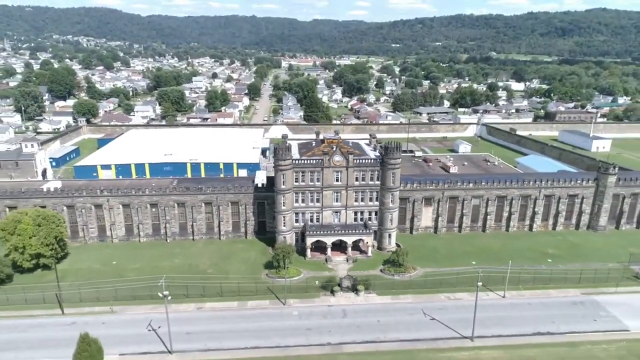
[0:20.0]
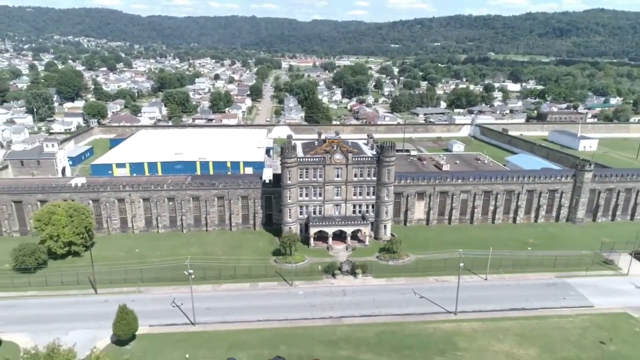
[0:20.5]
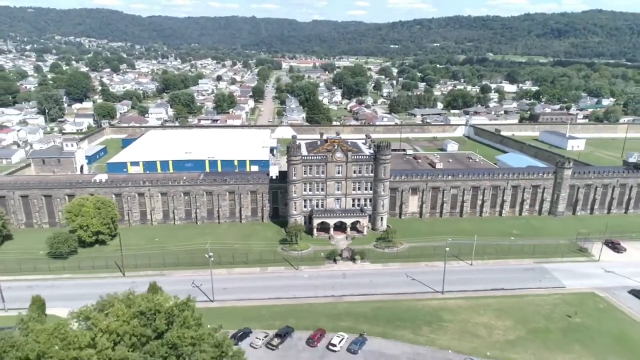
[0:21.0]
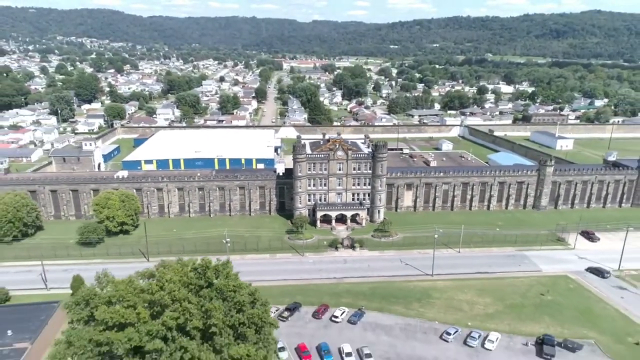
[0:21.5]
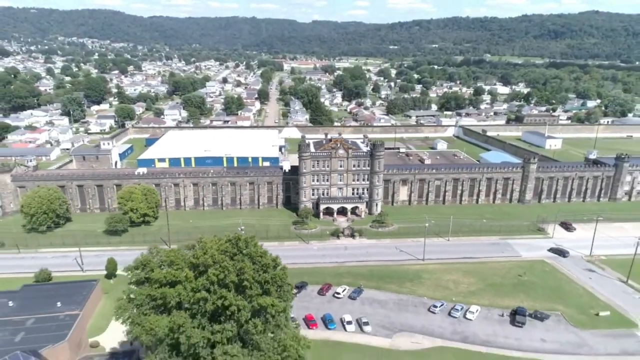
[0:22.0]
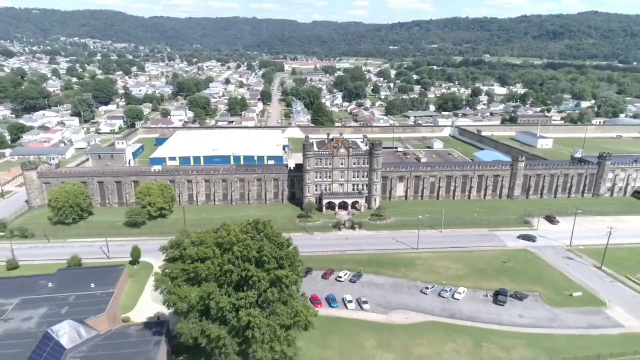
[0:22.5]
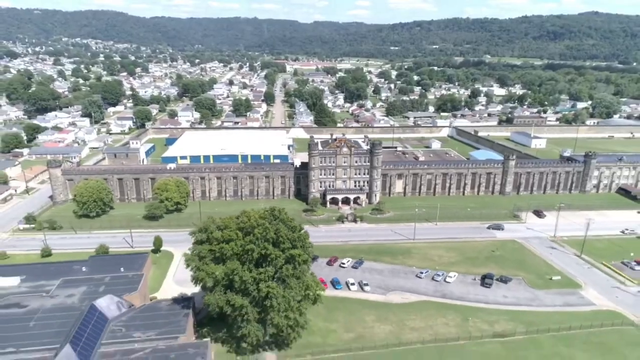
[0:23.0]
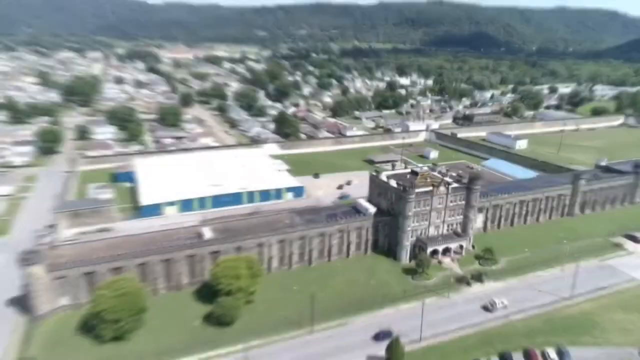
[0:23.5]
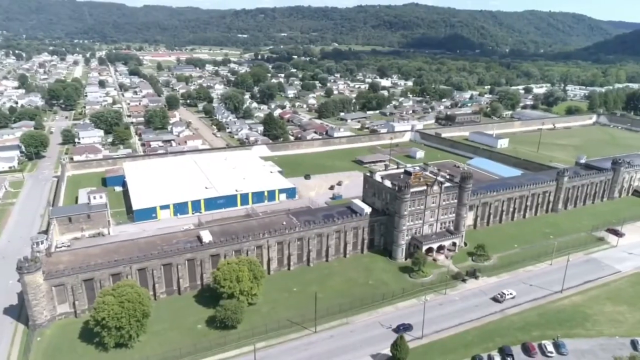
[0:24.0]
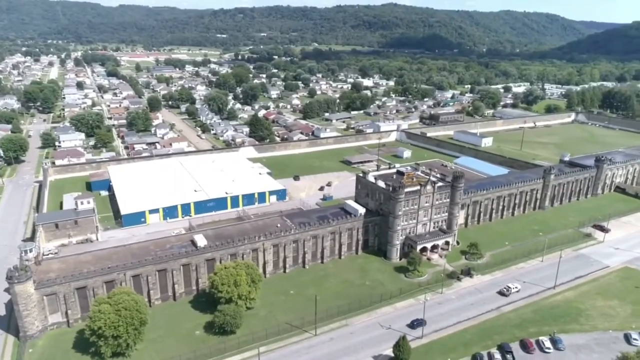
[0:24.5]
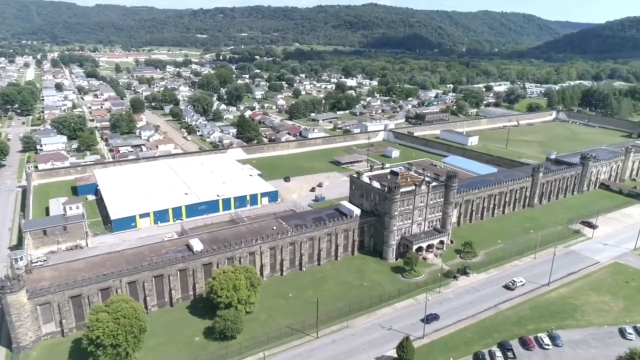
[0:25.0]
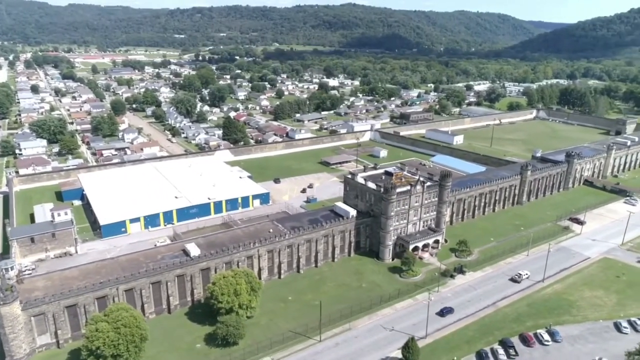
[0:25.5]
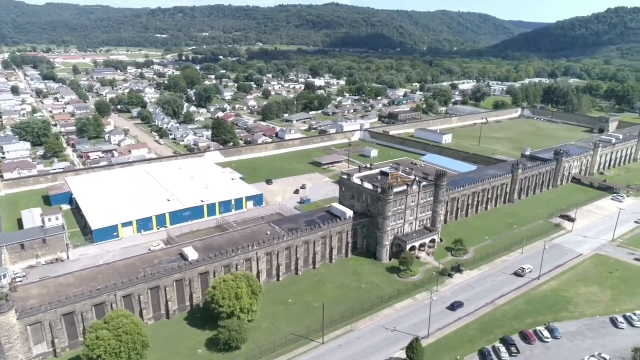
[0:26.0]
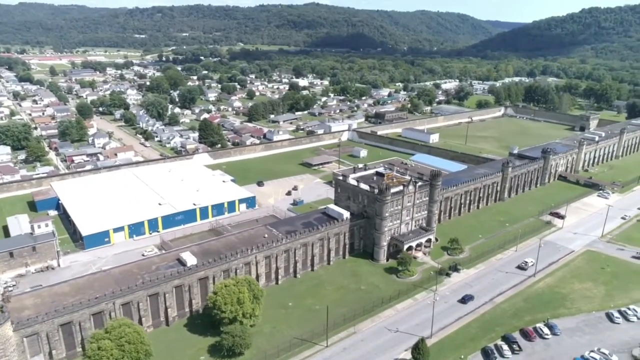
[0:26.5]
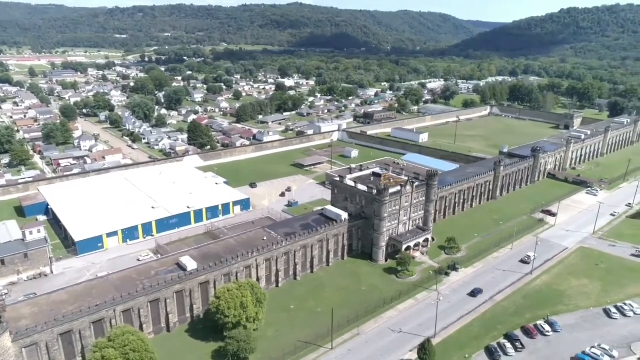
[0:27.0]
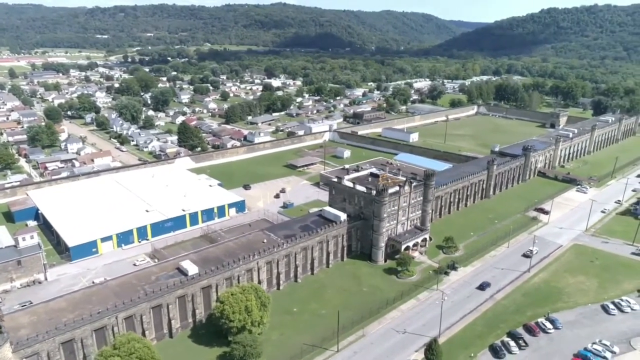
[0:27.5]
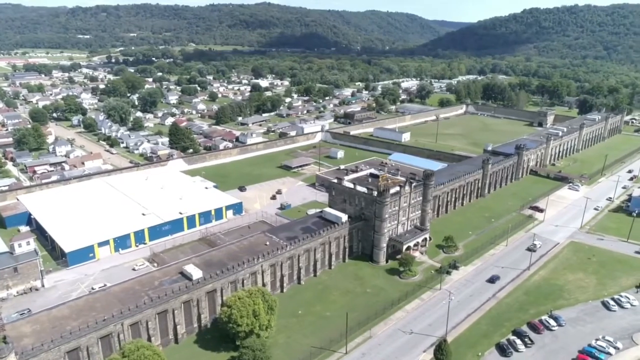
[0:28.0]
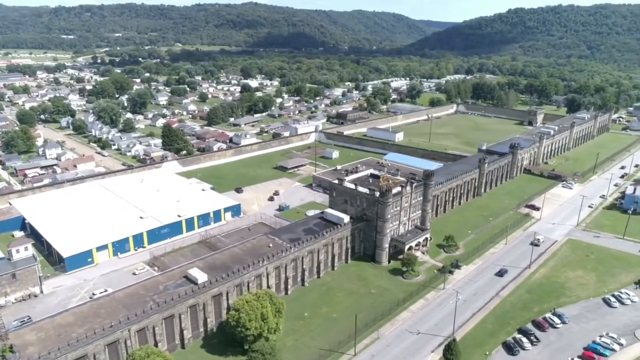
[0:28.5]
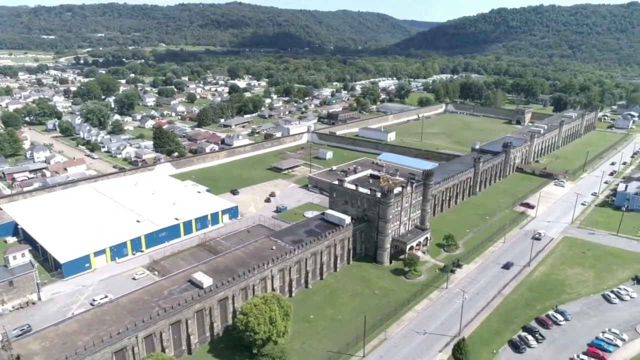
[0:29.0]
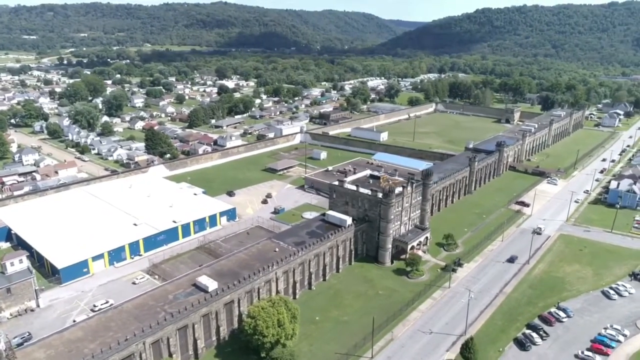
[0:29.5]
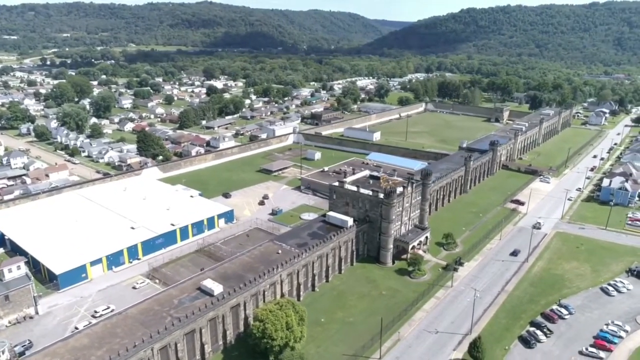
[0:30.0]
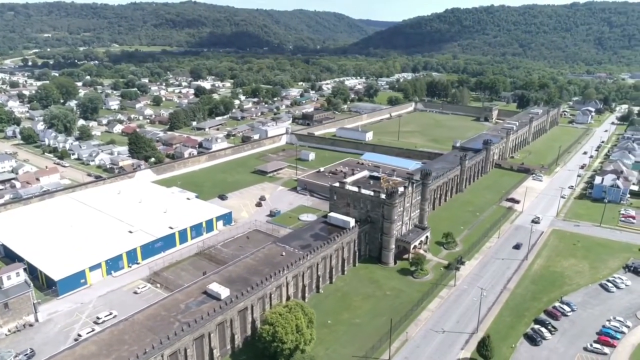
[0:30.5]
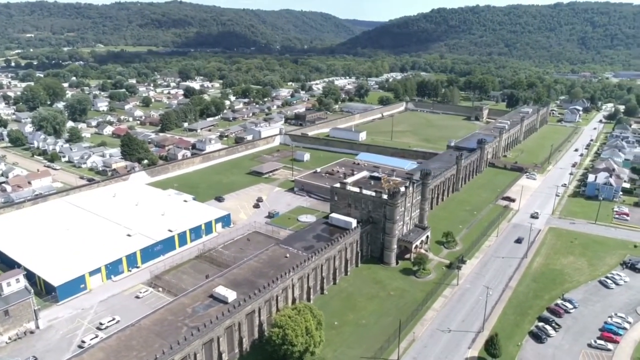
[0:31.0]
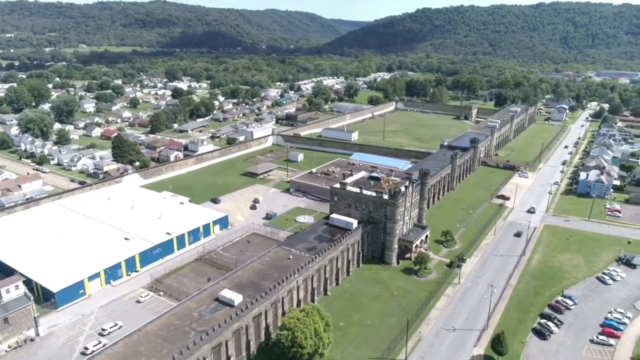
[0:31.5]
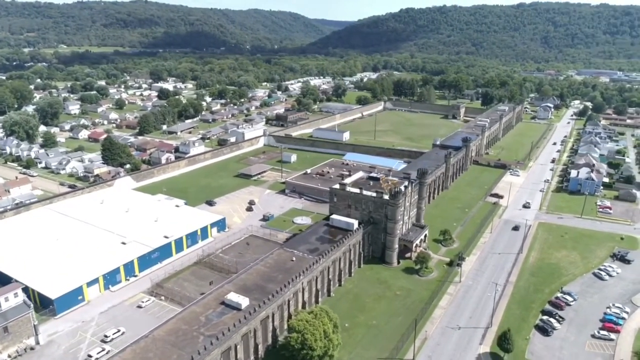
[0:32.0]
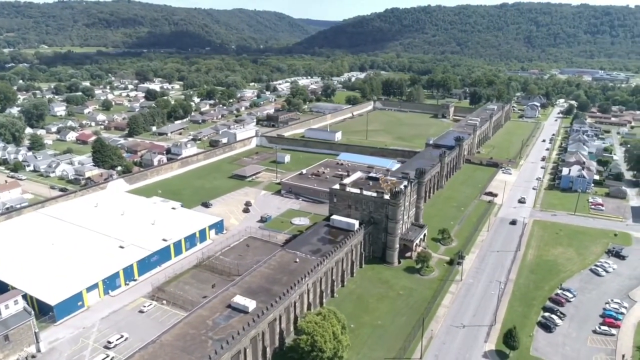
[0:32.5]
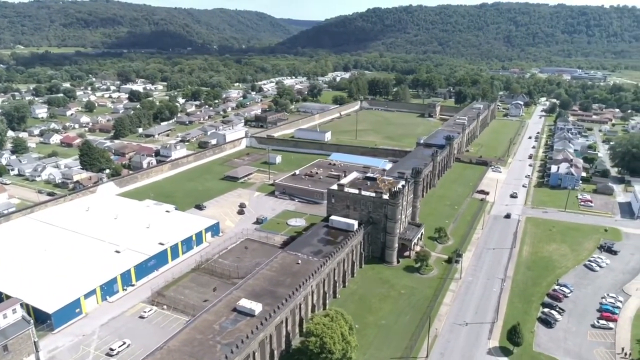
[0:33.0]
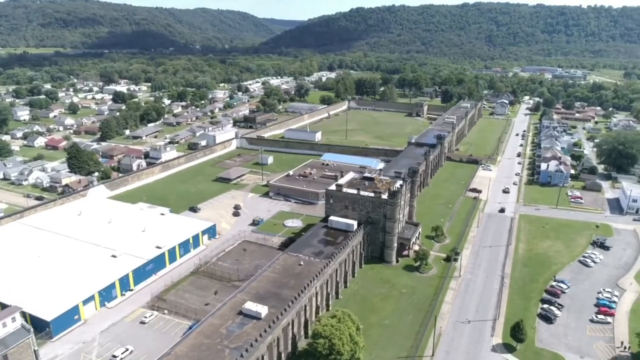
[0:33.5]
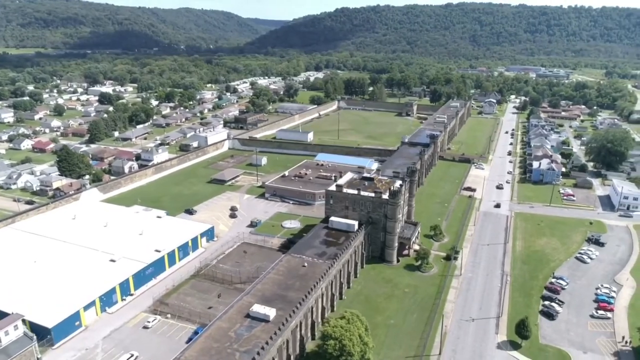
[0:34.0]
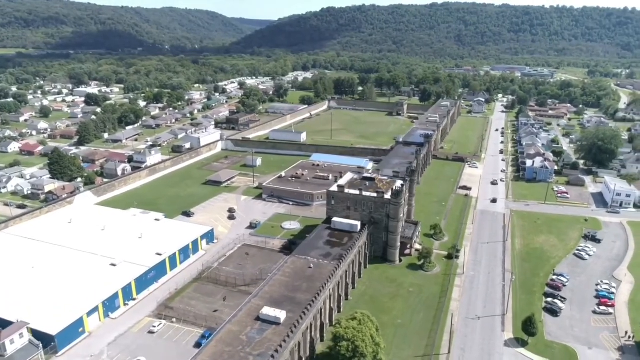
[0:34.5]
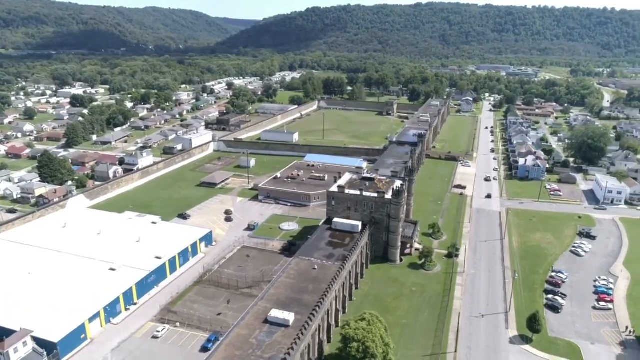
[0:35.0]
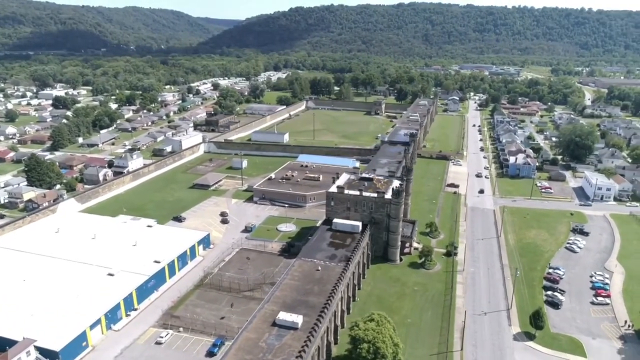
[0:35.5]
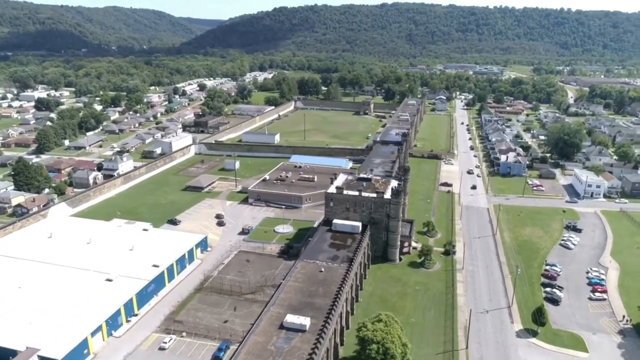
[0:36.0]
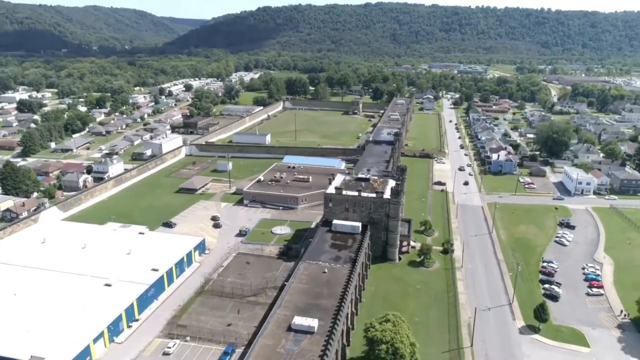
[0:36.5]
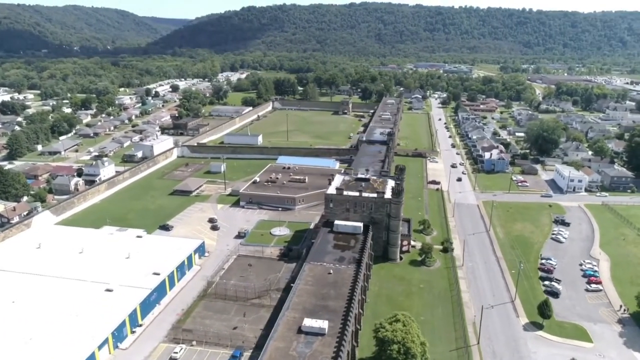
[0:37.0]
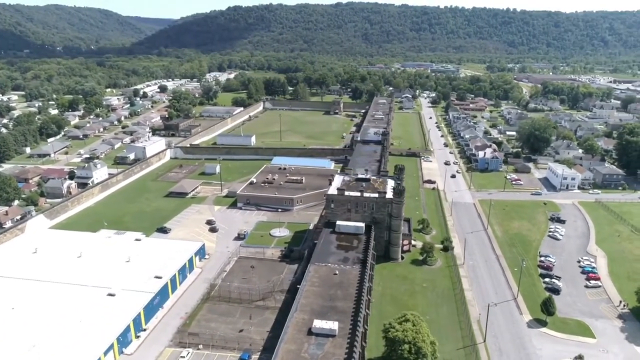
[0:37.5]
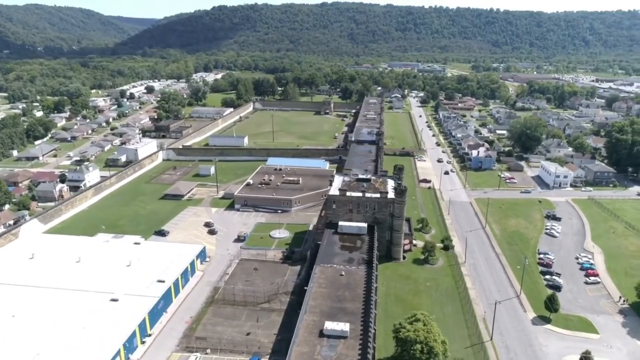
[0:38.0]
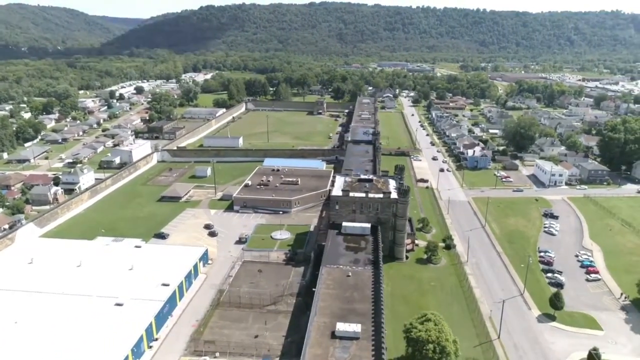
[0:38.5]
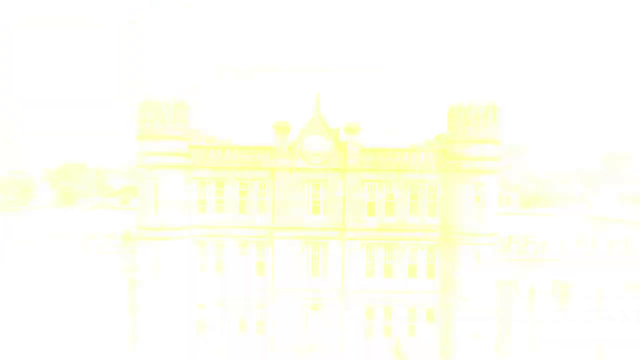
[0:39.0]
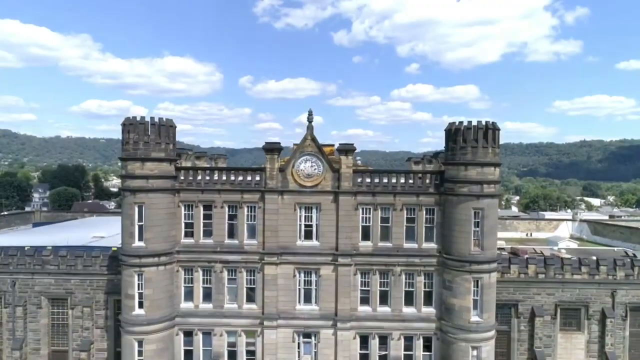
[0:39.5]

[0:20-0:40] Aerial drone footage shows a penitentiary building. Its perimeter has a very high wall built of stone. The main building has huge turrets and archways and looks very grand. In front of the penitentiary is a huge area of greenery, and there is high razor wire. The footage moves further away, showing more of the surrounding area, which is not very built up. There are some buildings and other facilities, but most of the area is mountains covered in green bushes and green trees. There seems to be a small village of many little white buildings, possibly houses or businesses. Within the prison walls there is a lot of green space.